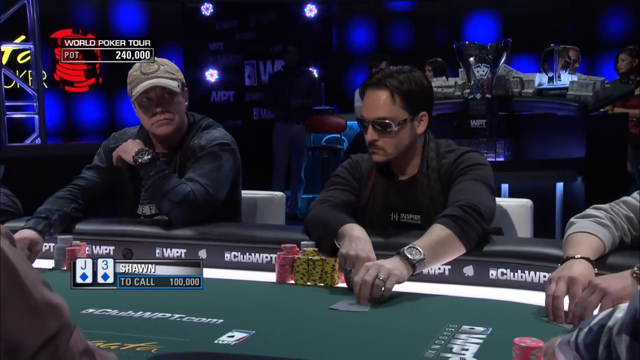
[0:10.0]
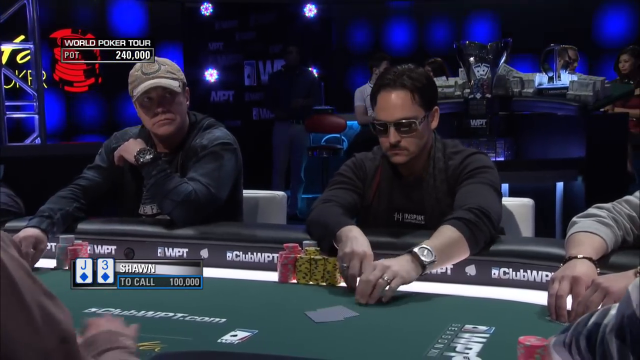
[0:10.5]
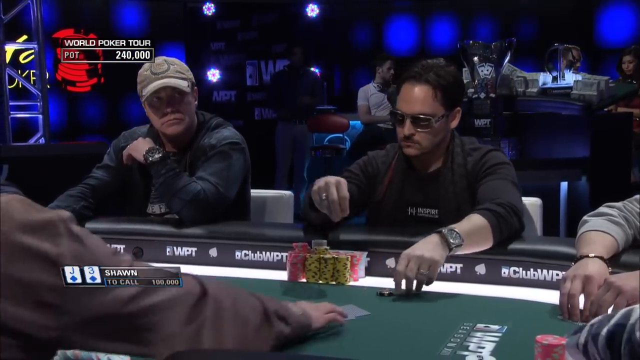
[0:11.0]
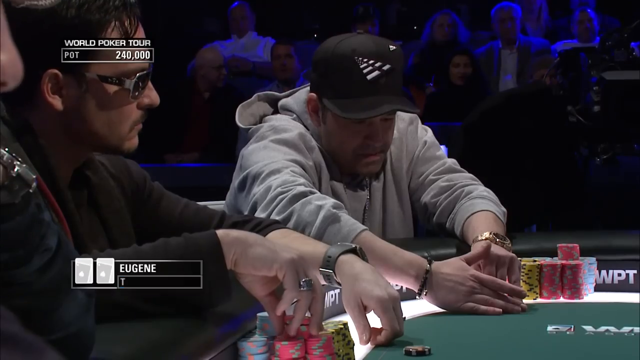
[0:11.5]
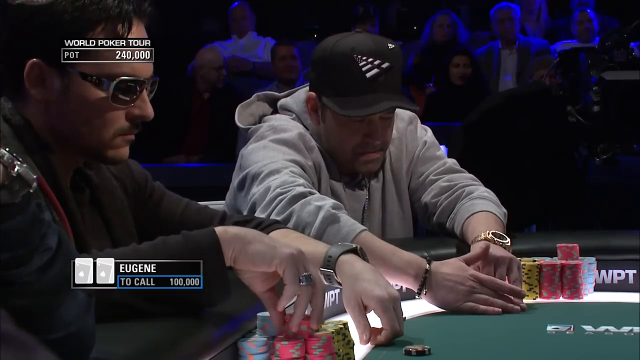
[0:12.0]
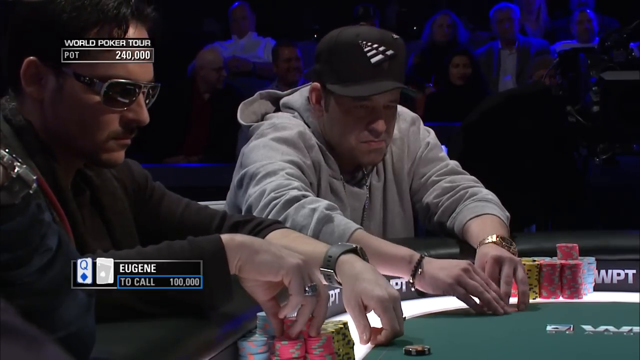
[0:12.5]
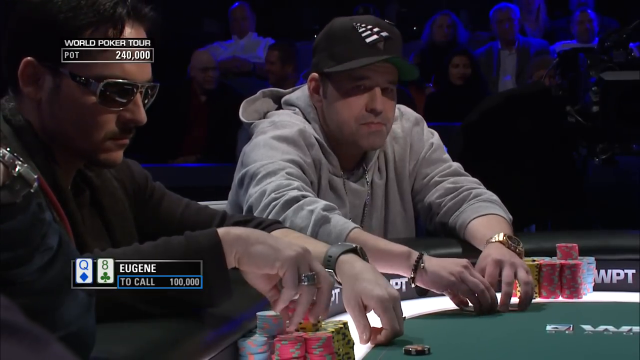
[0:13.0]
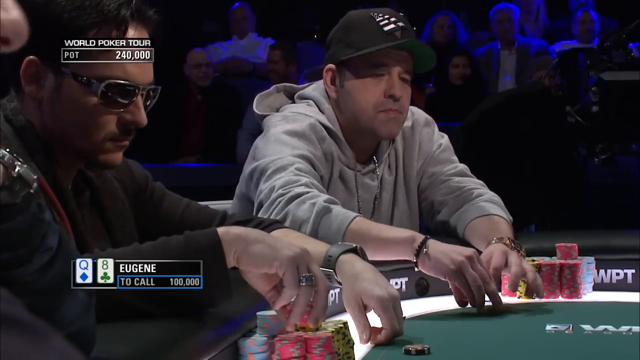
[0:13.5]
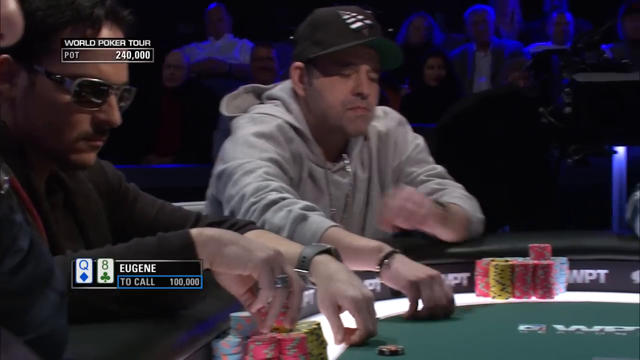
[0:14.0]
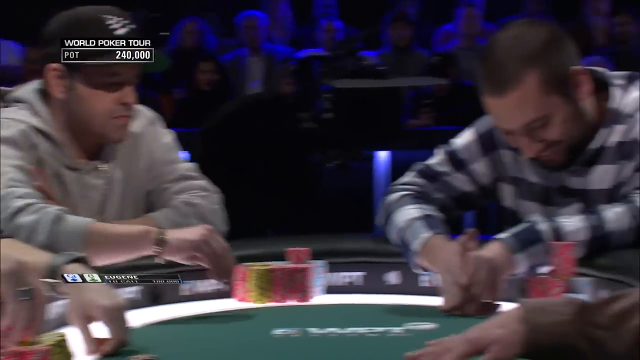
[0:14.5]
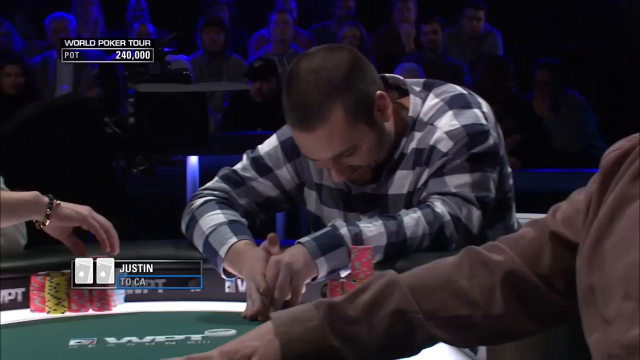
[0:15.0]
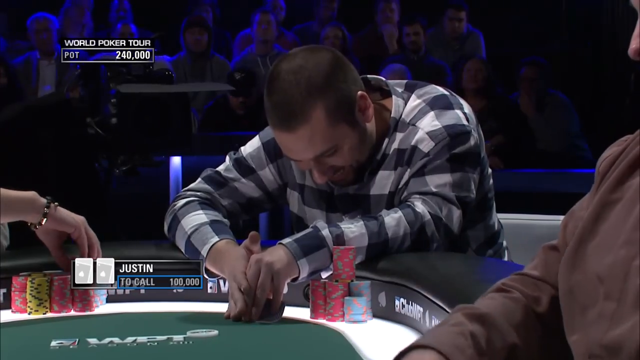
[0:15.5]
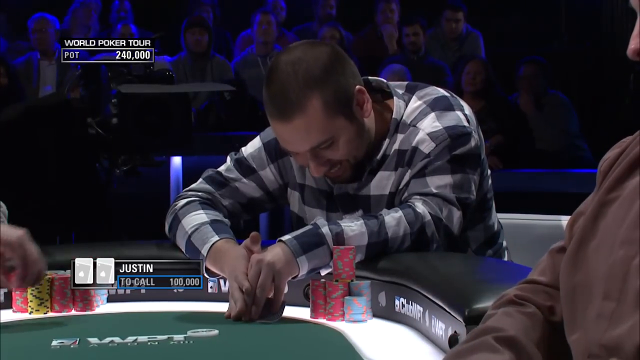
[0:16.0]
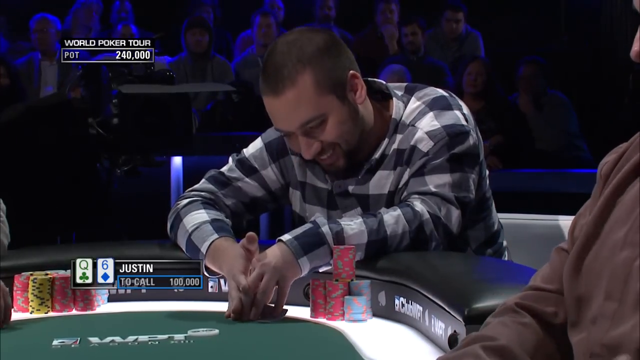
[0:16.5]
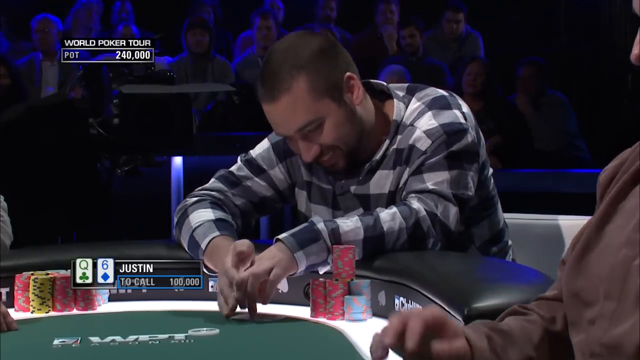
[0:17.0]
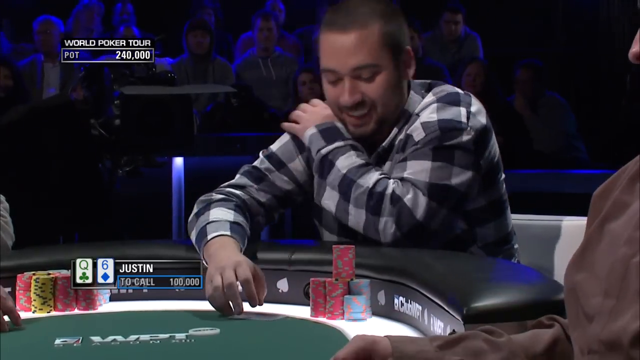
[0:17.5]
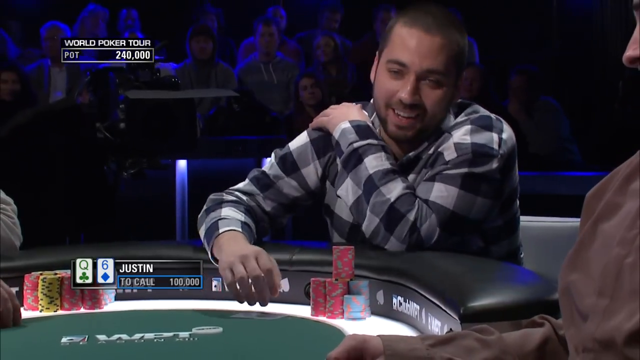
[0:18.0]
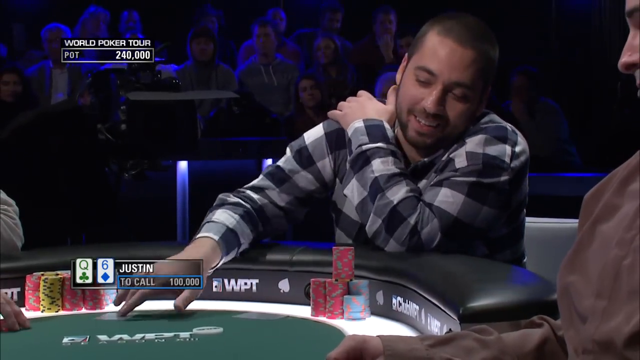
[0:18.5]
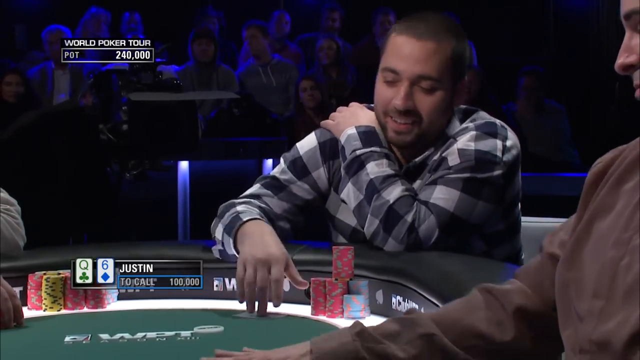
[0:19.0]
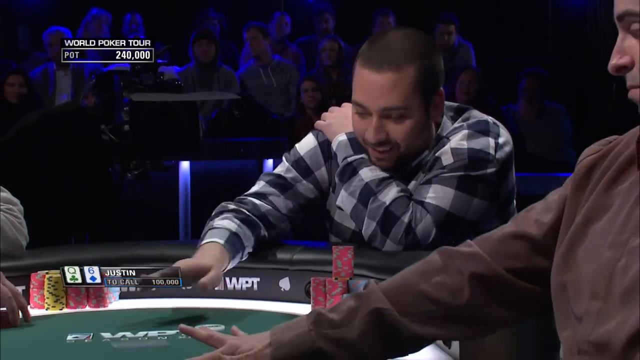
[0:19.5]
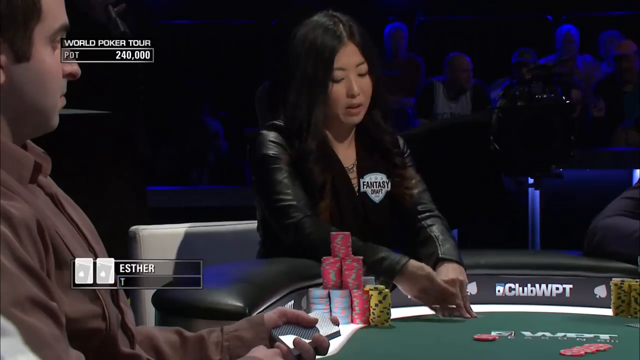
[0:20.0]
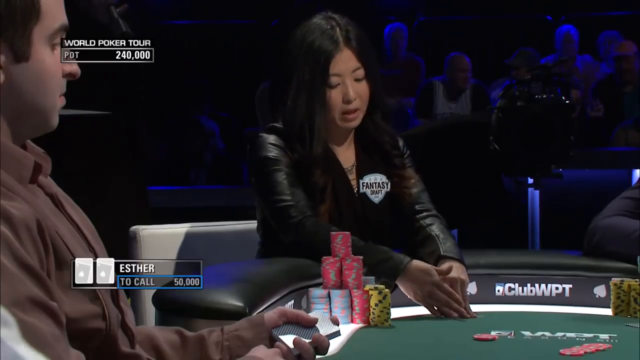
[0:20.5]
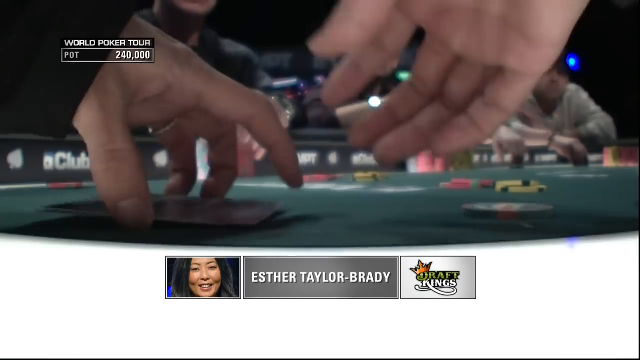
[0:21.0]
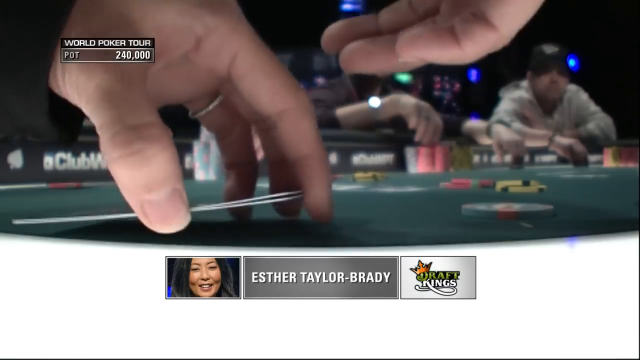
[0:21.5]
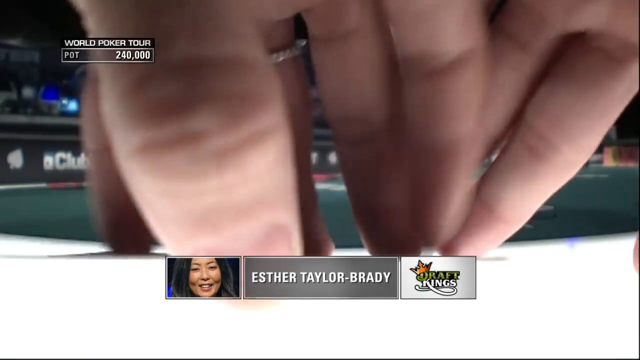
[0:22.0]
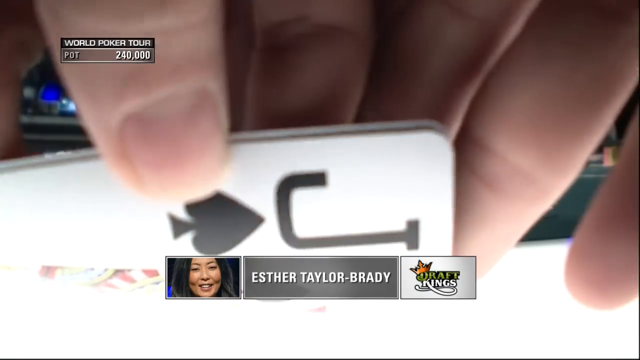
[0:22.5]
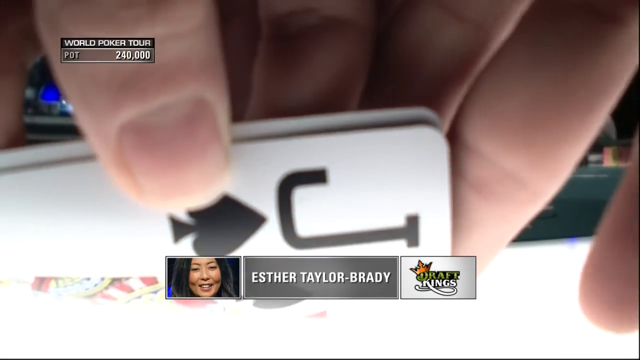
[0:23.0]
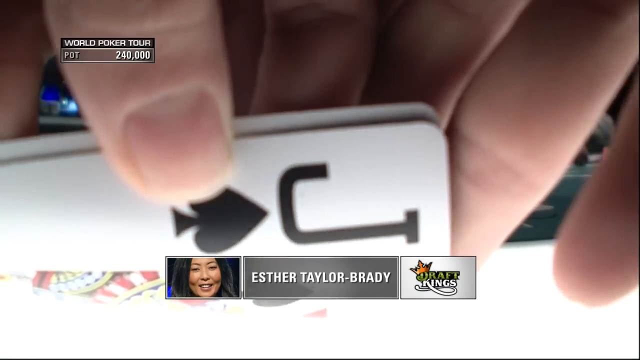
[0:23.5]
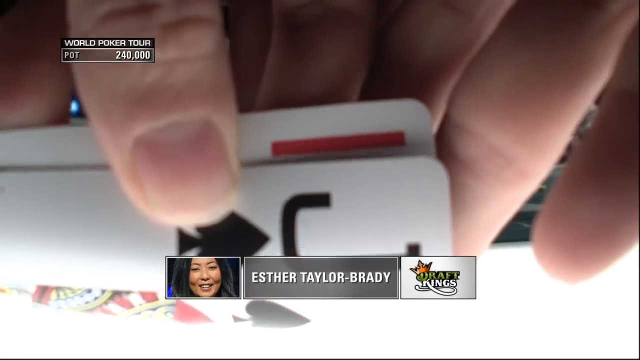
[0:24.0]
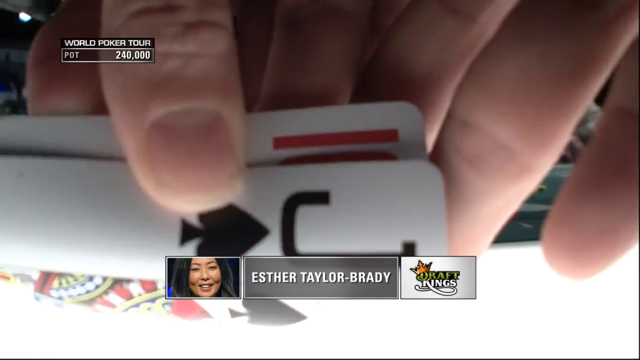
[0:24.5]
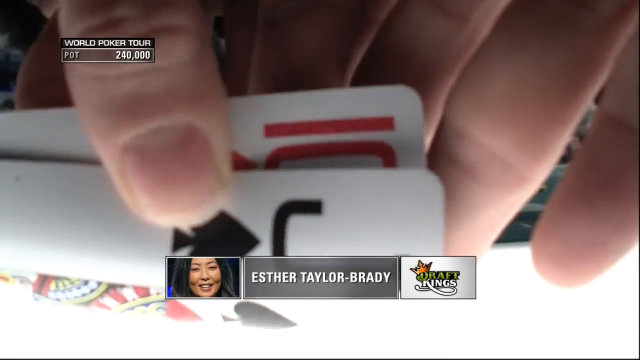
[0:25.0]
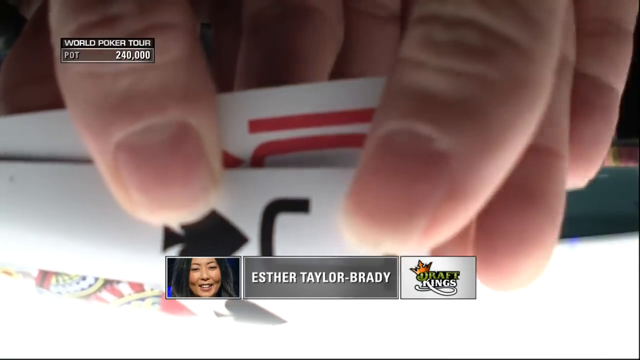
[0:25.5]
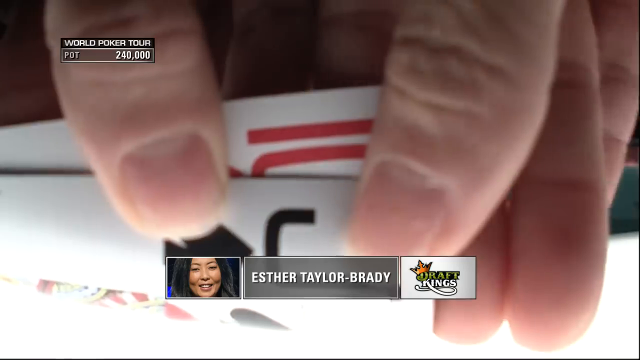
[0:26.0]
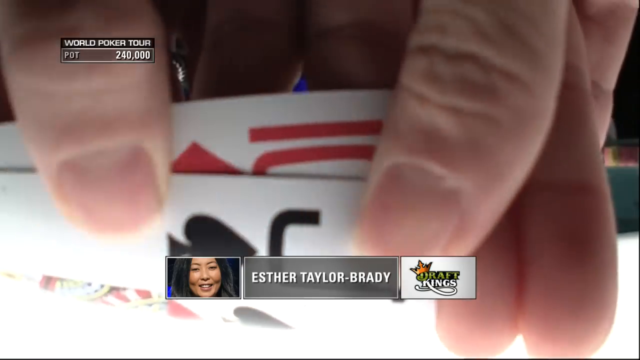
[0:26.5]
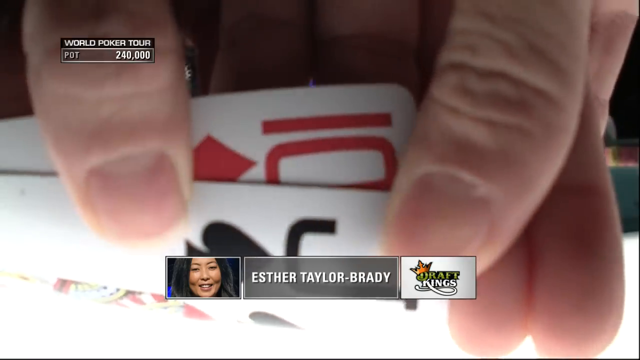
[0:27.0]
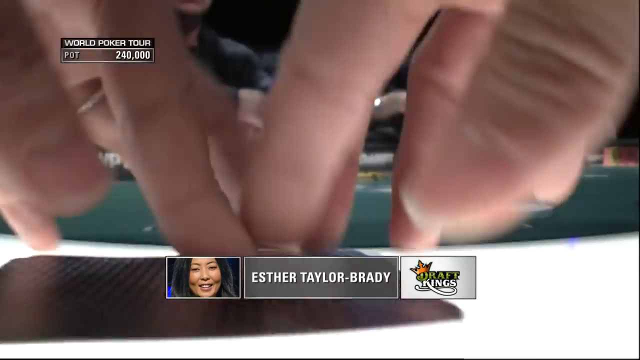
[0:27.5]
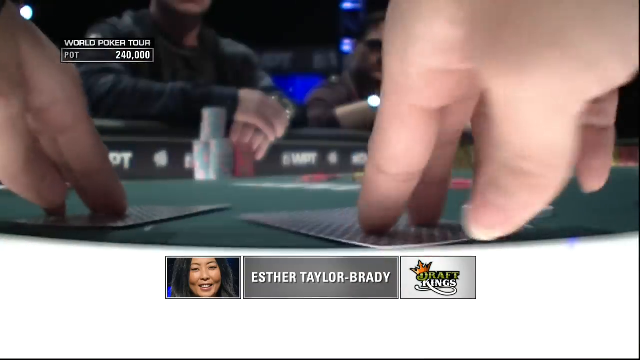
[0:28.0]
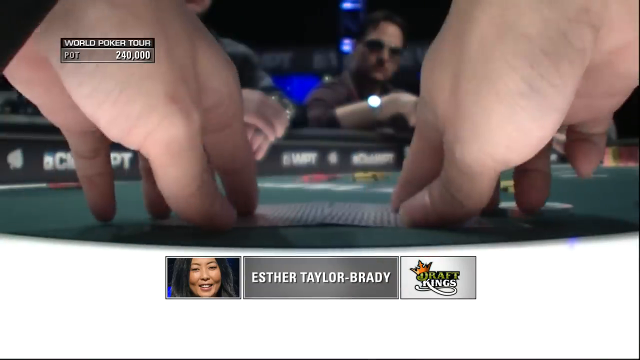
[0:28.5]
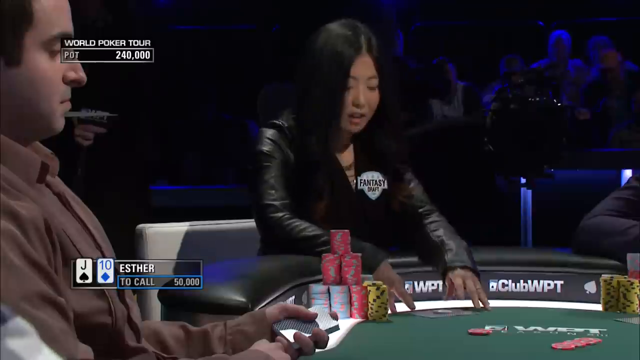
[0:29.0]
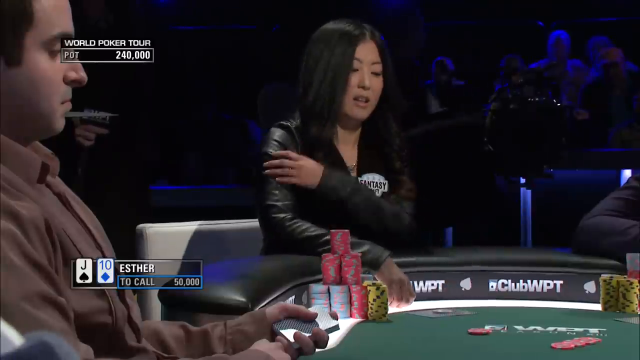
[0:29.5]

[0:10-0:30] Text at the top left reads "world poker tour pot 240,000". The man in the beige hat, with a watch on his left wrist, is looking into the distance at someone or something next to him on his left. In the middle of the screen is a man in a dark gray jacket with a smaller watch on his left wrist; he wears sunglasses, looks downward, and uses both hands to press down onto his cards. He has a stack of yellow, red and white poker chips. The scene jumps to a man wearing a black hat and a white hoodie with a logo on the shirt, who appears to throw a card in front of the dealer. It then jumps to another man in a white, brown and black checkered flannel, who looks downward and appears to be happy; he has a stack of red and light blue poker chips.